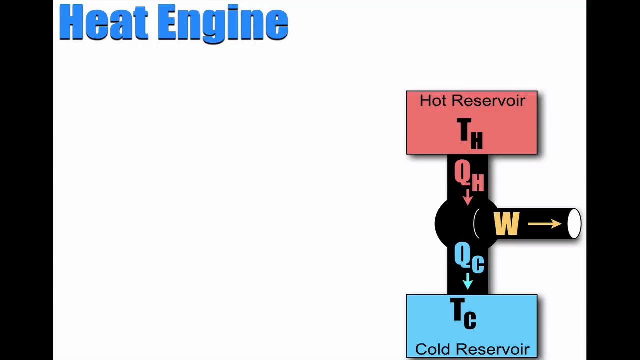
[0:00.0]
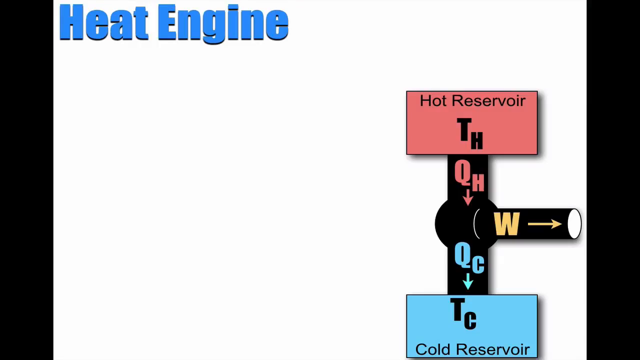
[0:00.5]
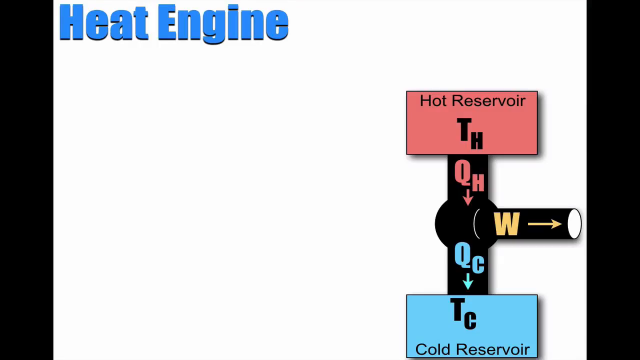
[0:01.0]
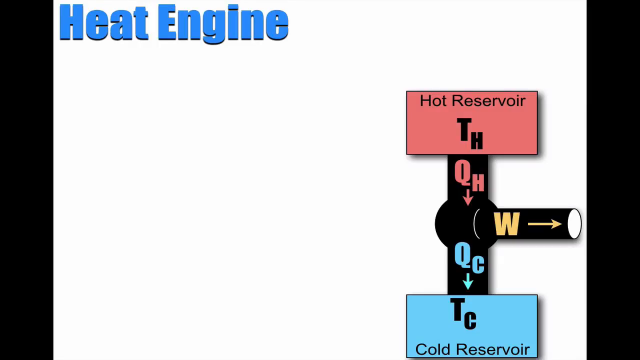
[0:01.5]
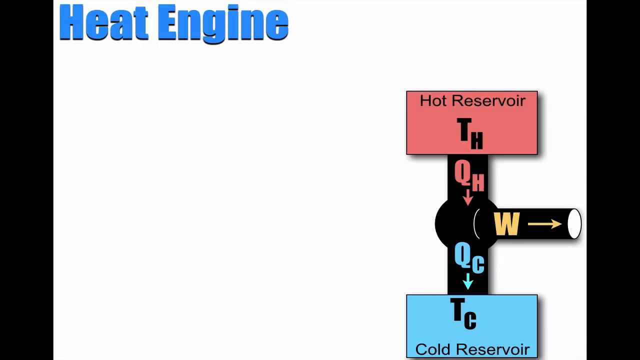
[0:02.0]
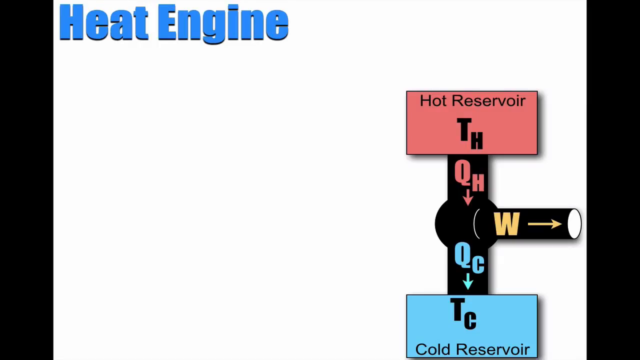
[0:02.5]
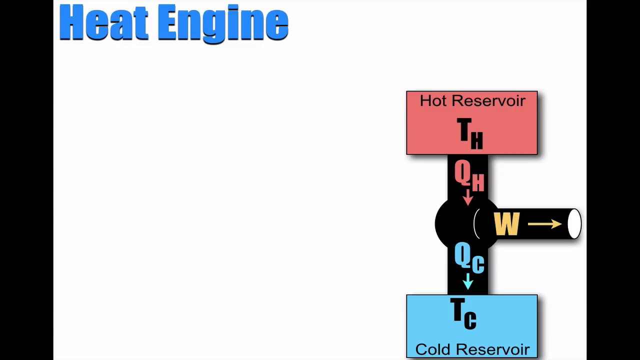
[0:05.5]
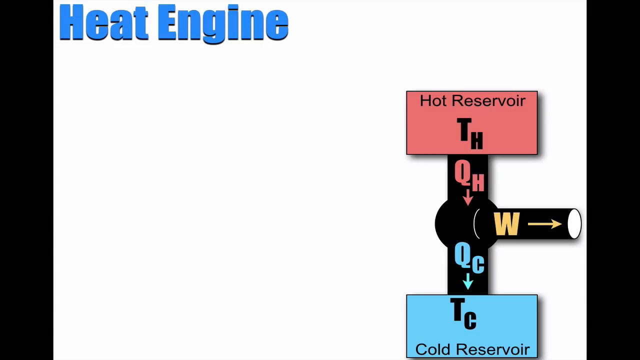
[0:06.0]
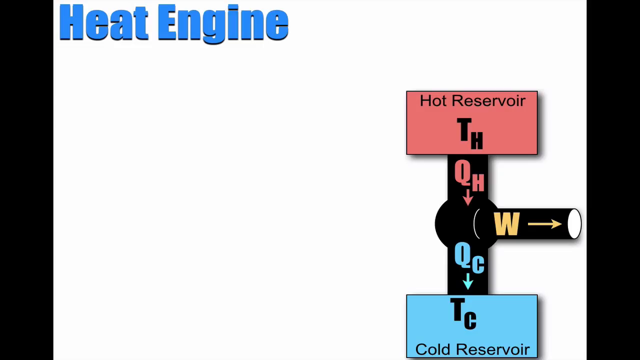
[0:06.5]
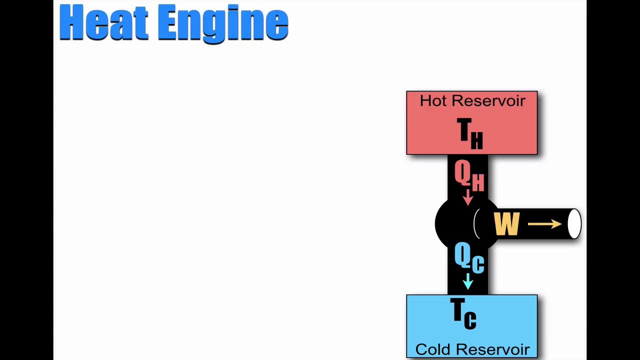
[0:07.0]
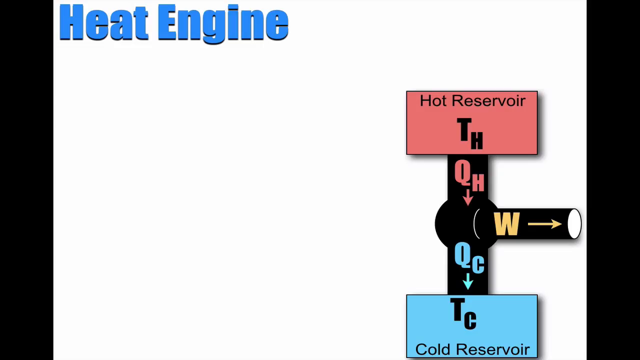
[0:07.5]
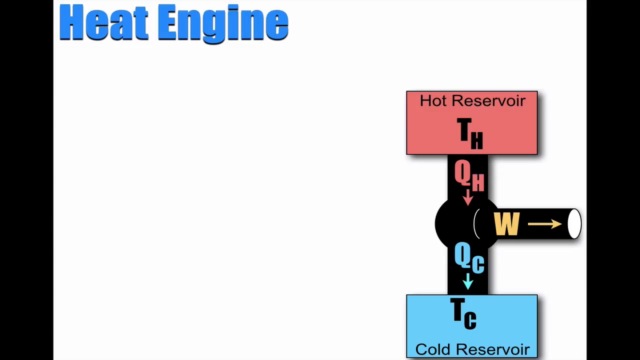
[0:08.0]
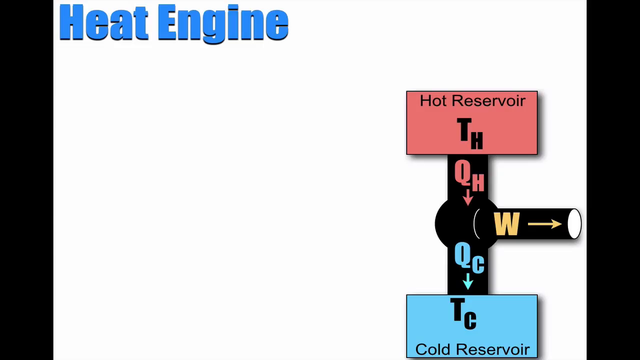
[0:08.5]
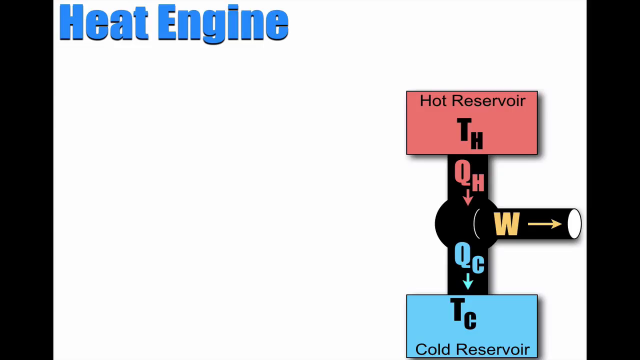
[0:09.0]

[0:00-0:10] The screen has a white background with a black border running from top to bottom on either side. In the top left, large blue text reads "heat engine". On the right-hand side is a diagram with two containers. At the bottom is one marked "TC" in blue; its other text is not legible, but it possibly says "cold reservoir" or something similar. At the top is a red box with "hot reservoir" and "TH". What looks like a pipe leads between the two. The bottom half of the pipe has the blue letters "QC" and an arrow pointing downwards, and the top half has the letters "QH" in pink, a similar color to the hot reservoir background. Between the two halves is a circular joint, and leading off to the right, marked with a yellow "W" and an arrow, is what looks to be an exit pipe.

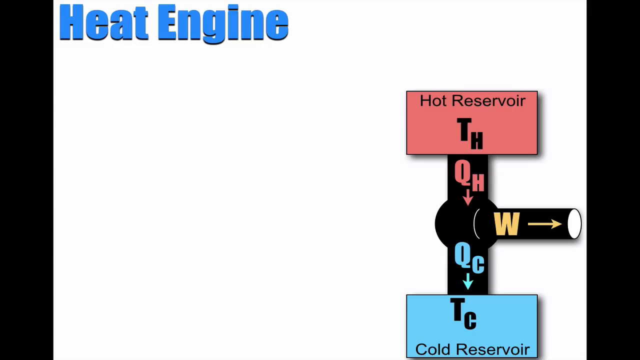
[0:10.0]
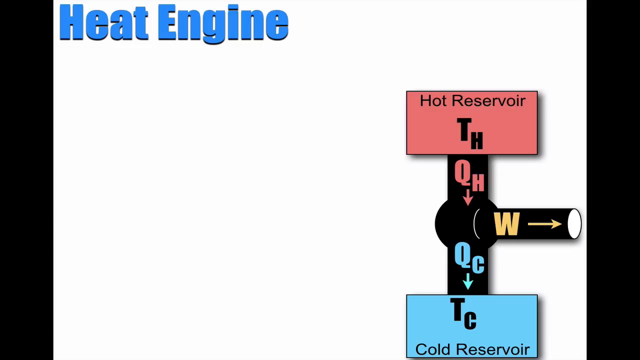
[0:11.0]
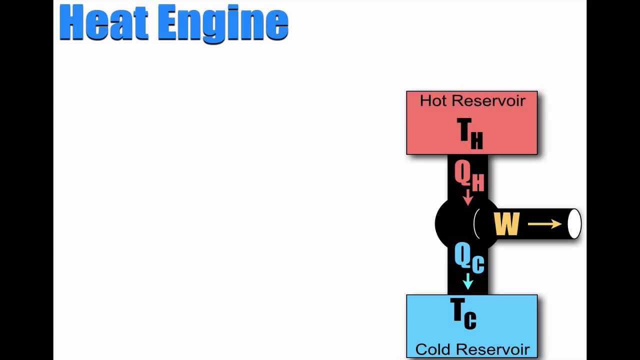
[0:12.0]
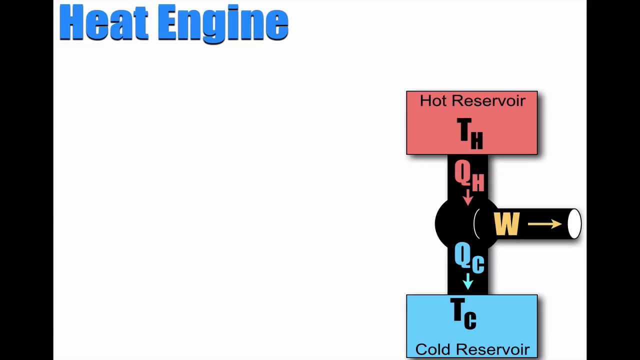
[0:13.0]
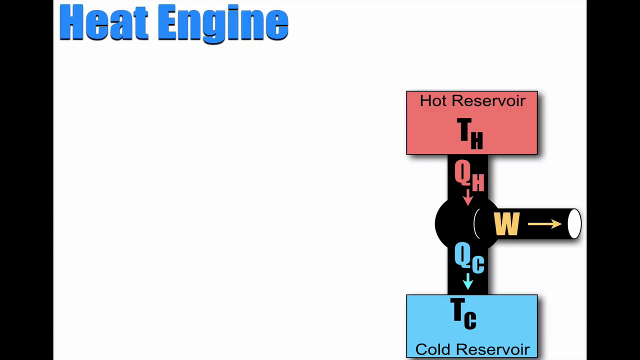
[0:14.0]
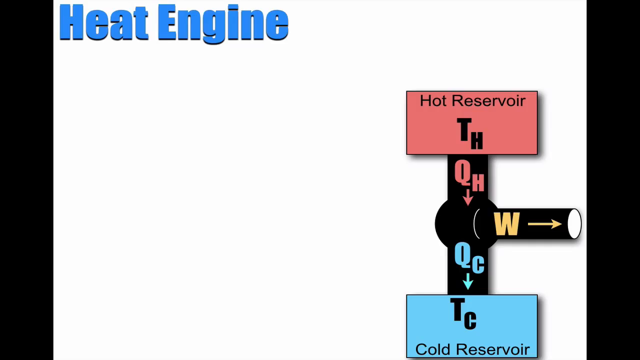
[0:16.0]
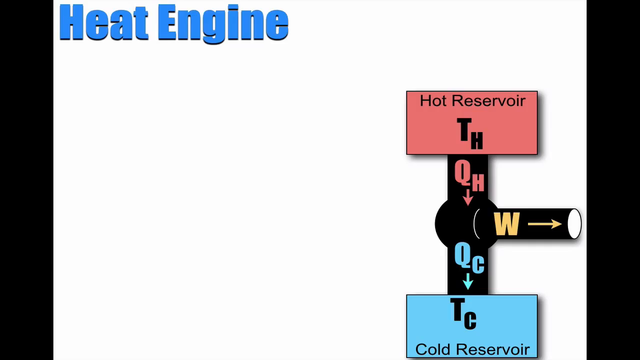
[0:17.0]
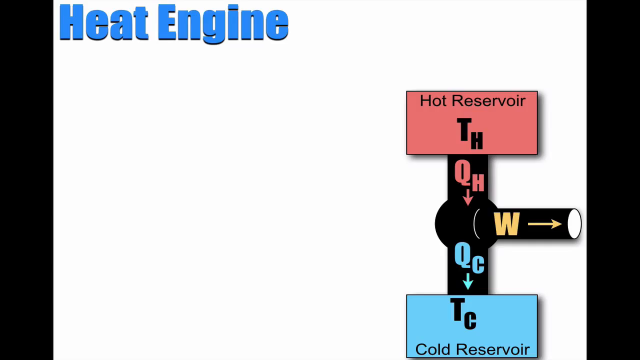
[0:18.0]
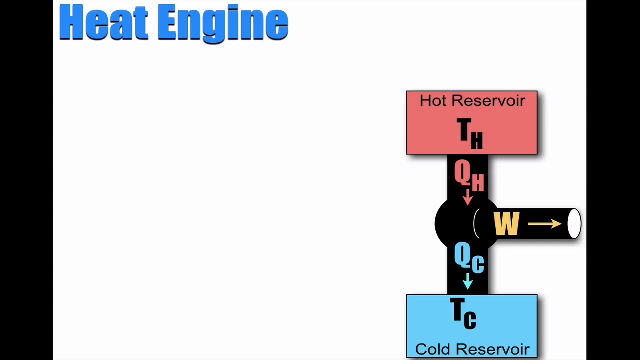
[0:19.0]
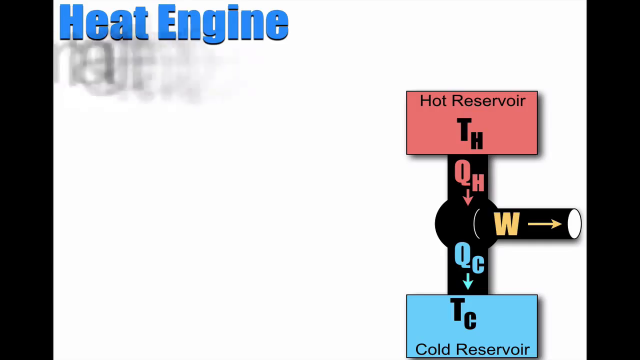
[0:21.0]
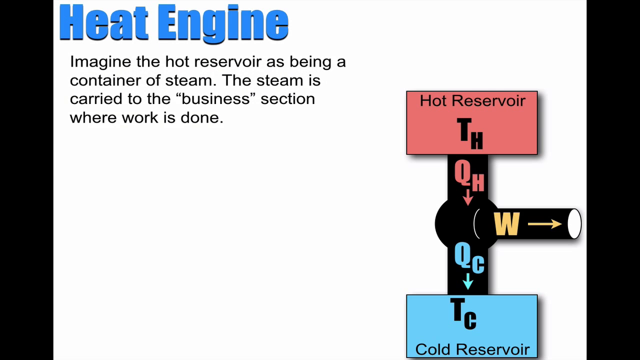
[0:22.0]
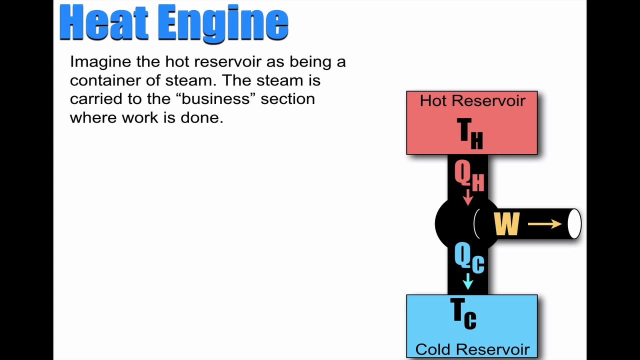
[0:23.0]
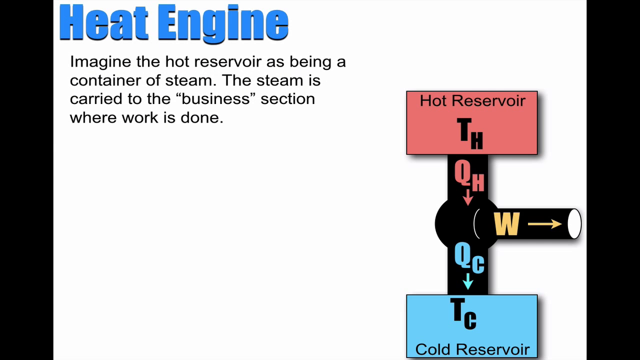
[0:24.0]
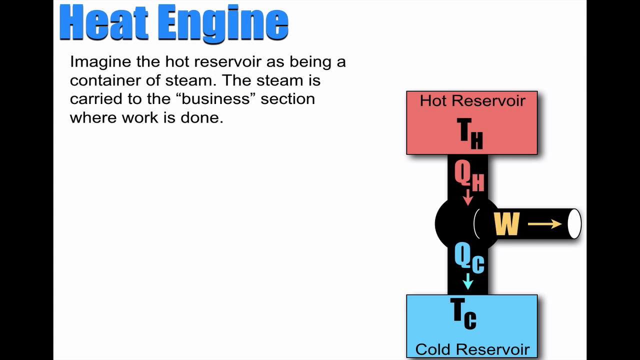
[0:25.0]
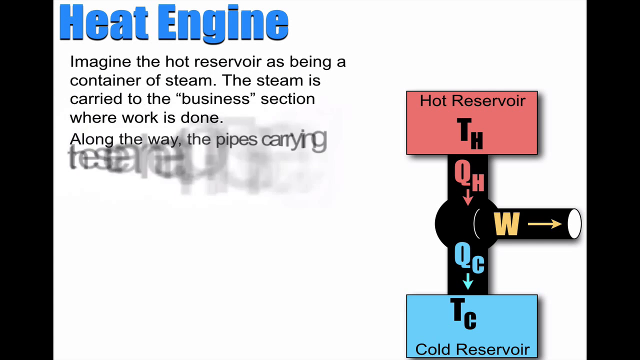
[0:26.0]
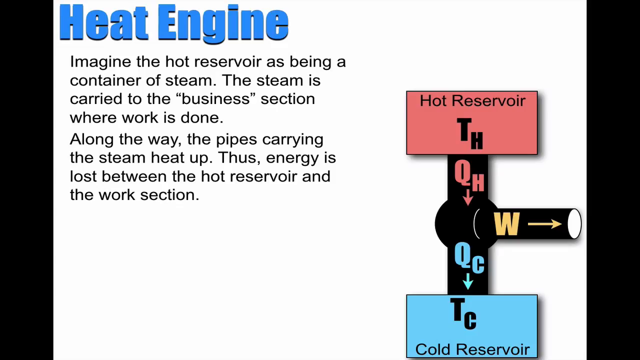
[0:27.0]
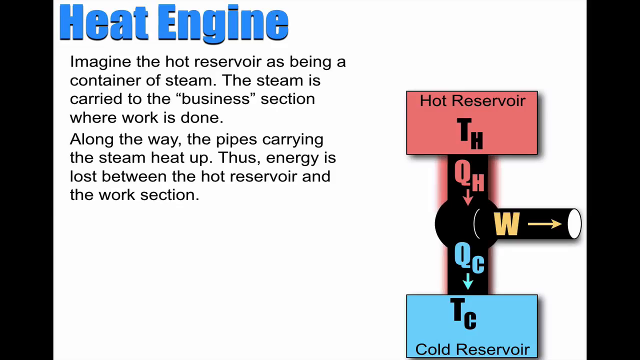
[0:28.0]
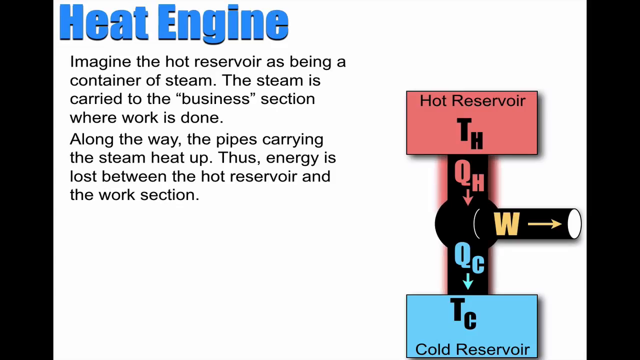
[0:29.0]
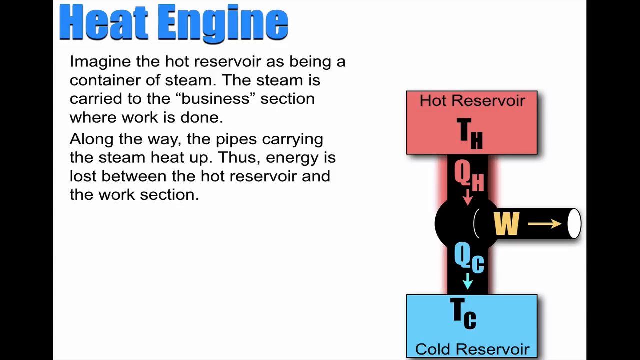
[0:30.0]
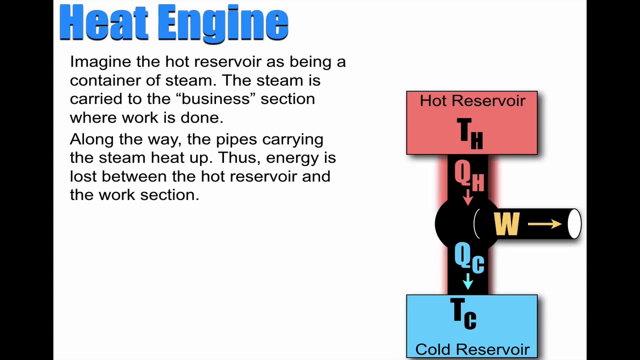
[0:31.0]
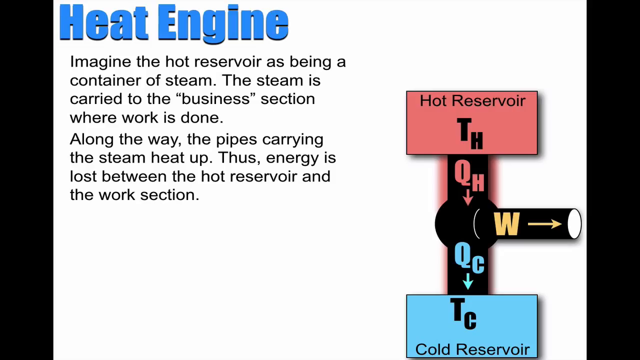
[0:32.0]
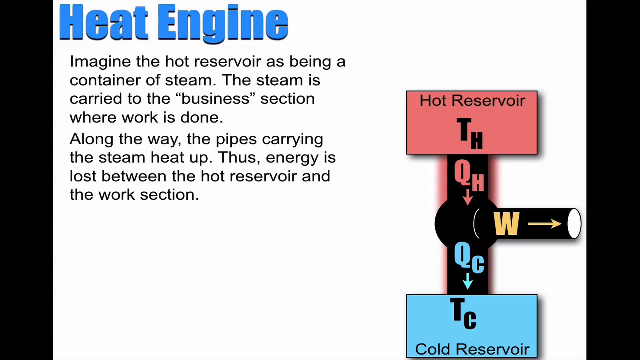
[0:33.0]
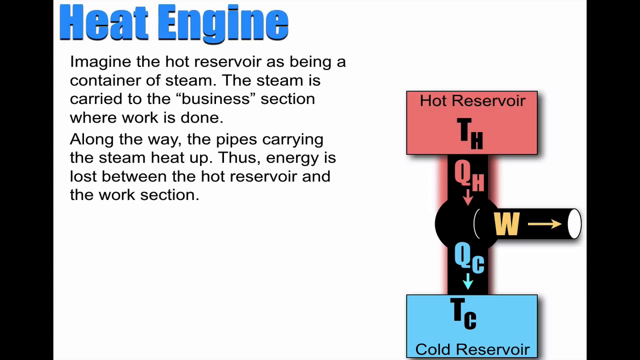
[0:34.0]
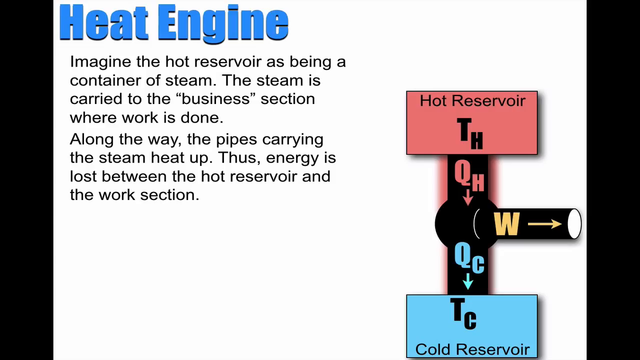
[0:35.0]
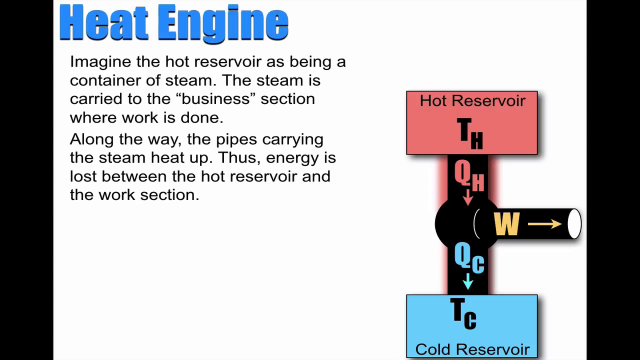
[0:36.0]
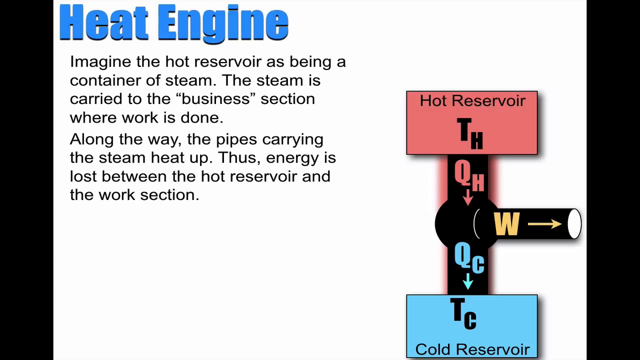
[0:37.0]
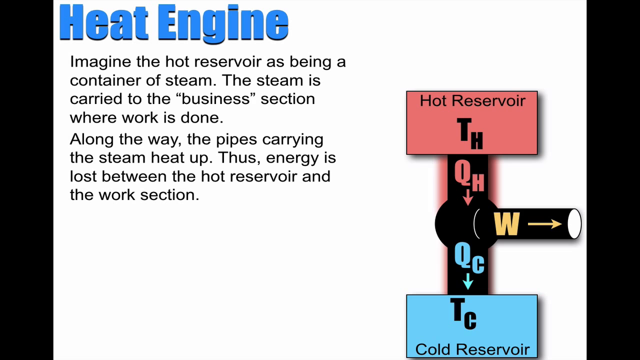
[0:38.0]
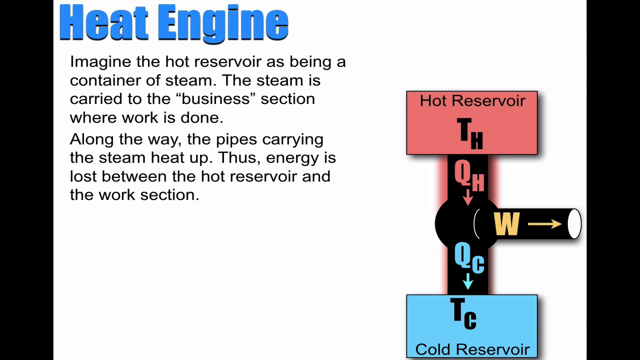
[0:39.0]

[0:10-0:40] The black vertical borders, the "heat engine" heading and the diagram on the right remain. Under the heading, text lands quickly word by word: "imagine the hot reservoir as being a container of steam.", followed by a sentence about the steam being carried to a section "where work is done." Further text drops in the same way, so quickly that the paragraph appears almost instantaneously: "along the way, the pipes carrying the steam heat up, thus energy is lost between the hot reservoir and the work section." The outside of the top part of the pipe, marked "QH", then becomes red, matching the color of the hot reservoir.